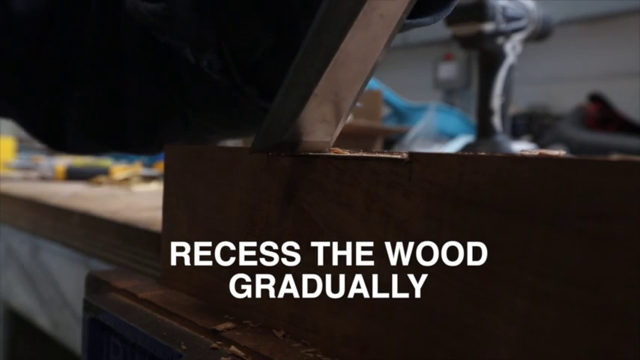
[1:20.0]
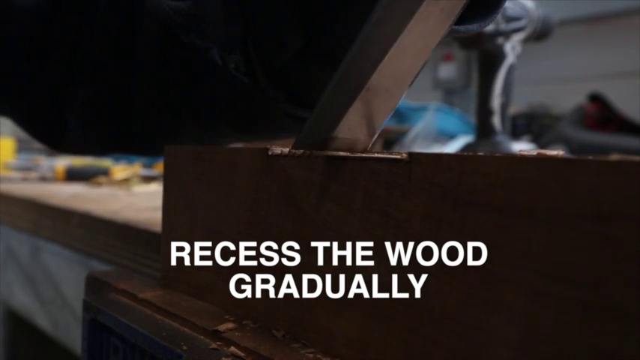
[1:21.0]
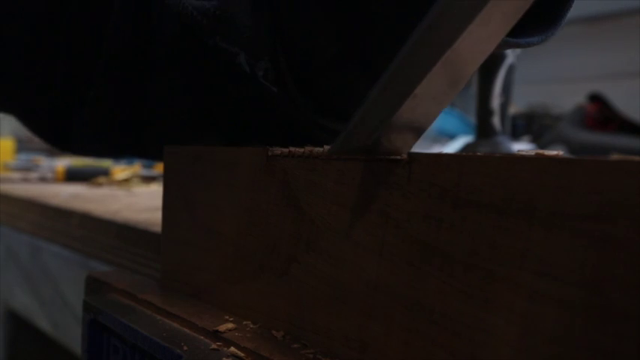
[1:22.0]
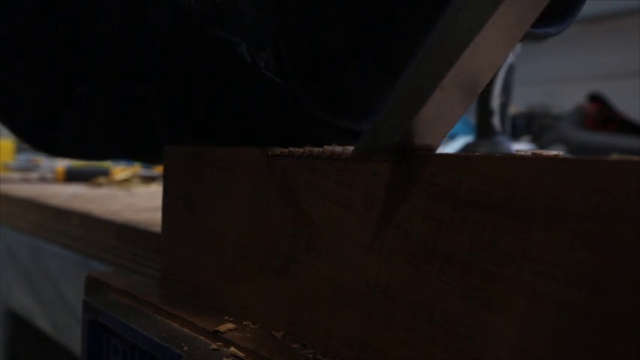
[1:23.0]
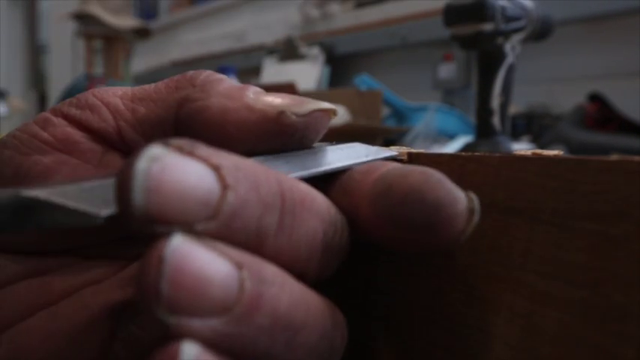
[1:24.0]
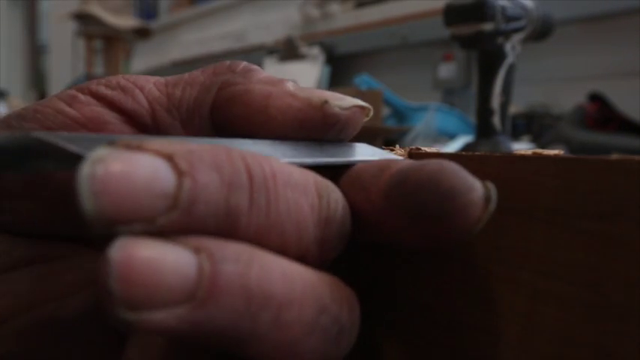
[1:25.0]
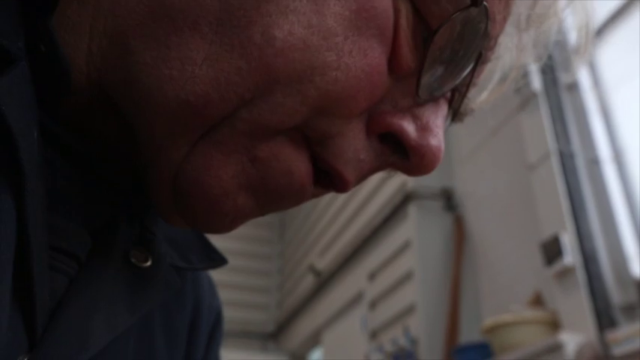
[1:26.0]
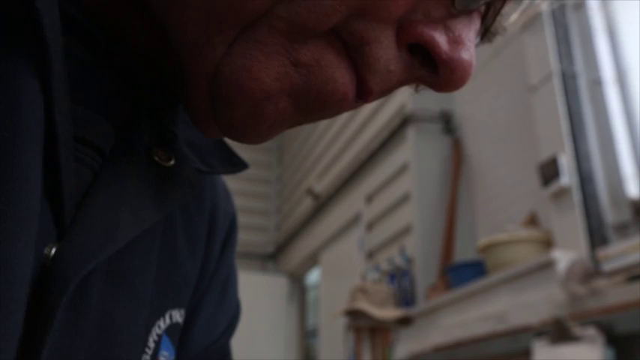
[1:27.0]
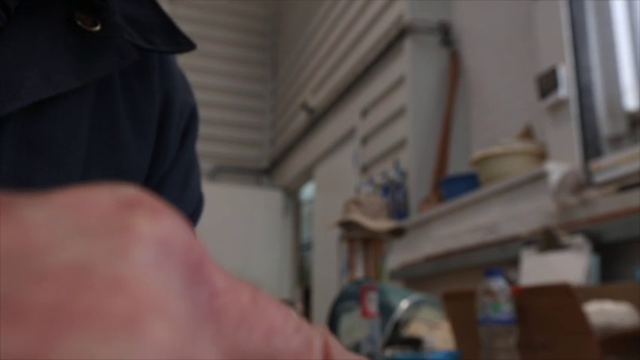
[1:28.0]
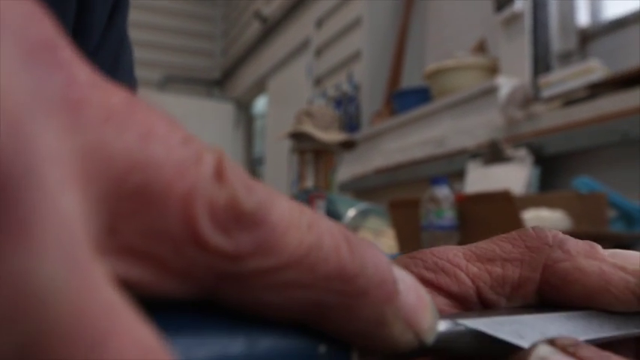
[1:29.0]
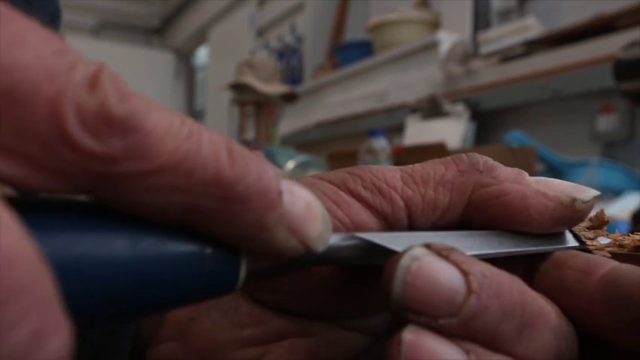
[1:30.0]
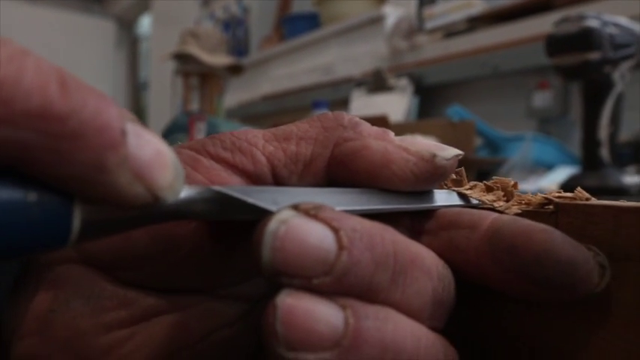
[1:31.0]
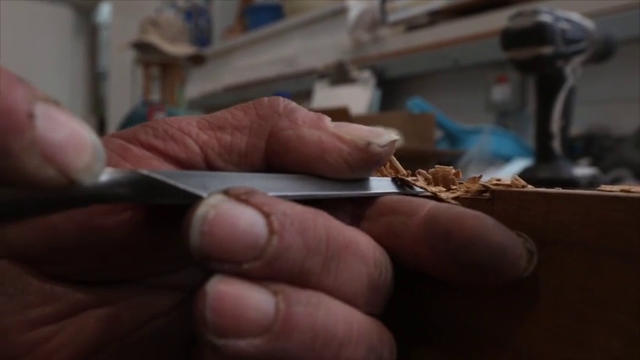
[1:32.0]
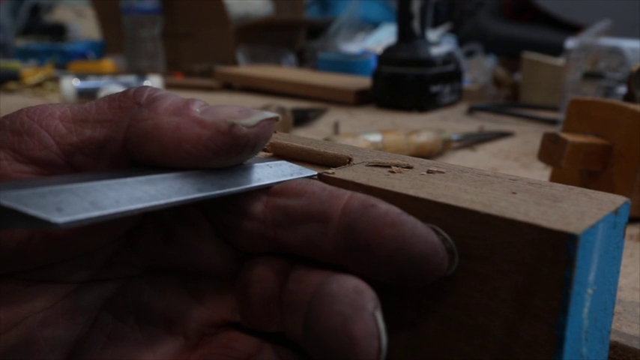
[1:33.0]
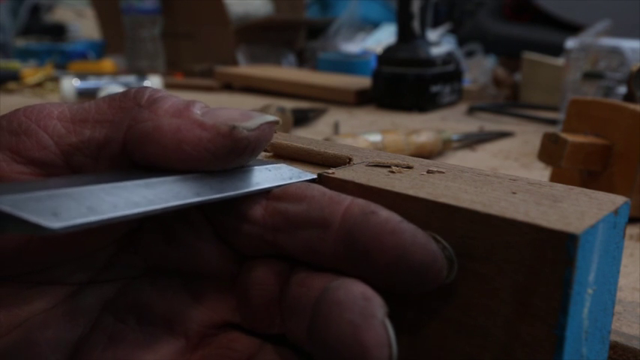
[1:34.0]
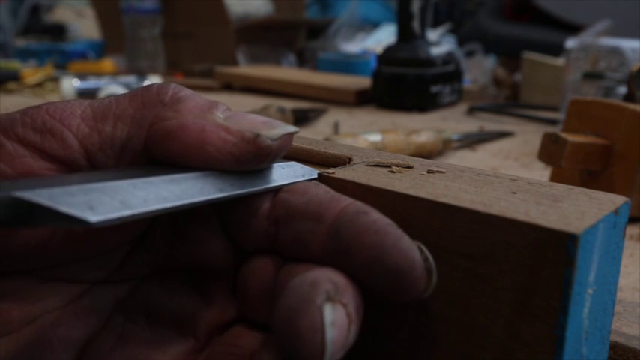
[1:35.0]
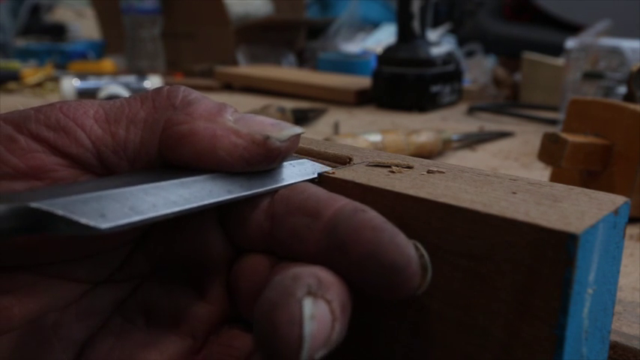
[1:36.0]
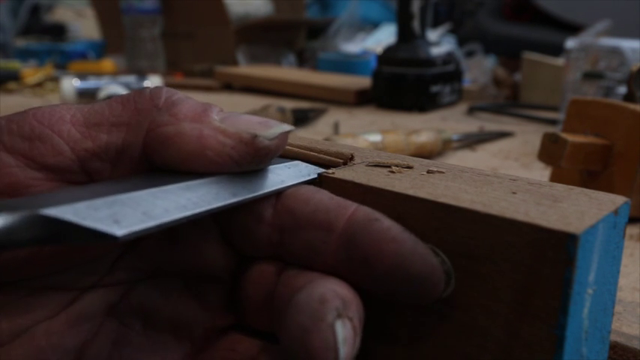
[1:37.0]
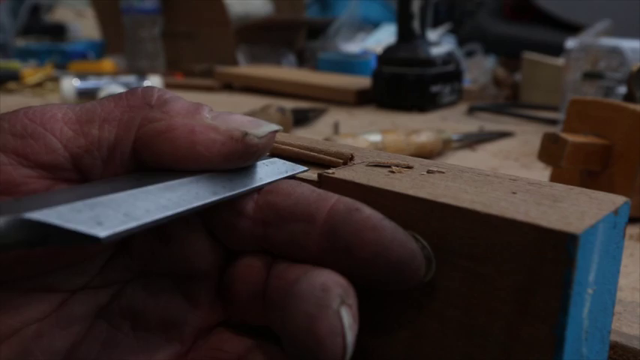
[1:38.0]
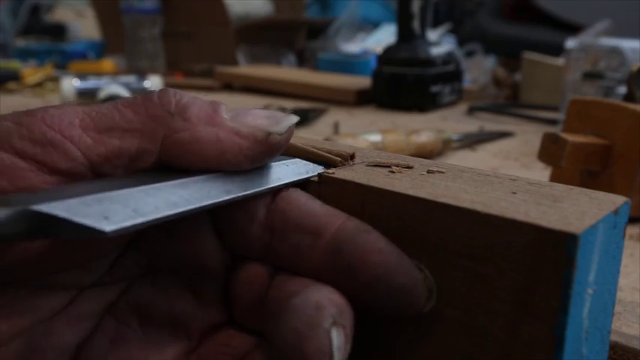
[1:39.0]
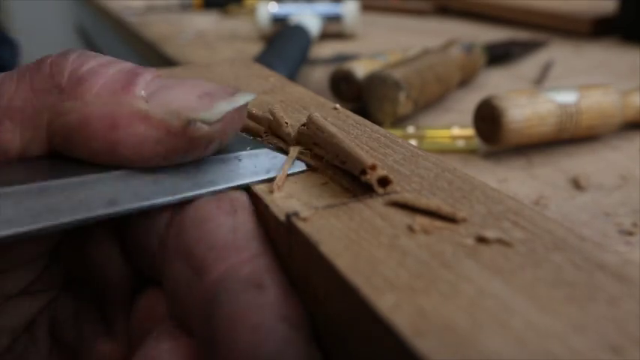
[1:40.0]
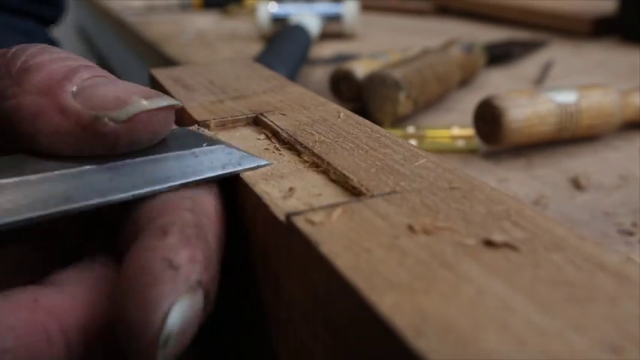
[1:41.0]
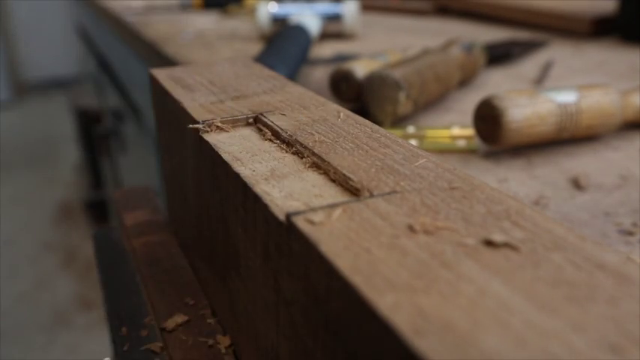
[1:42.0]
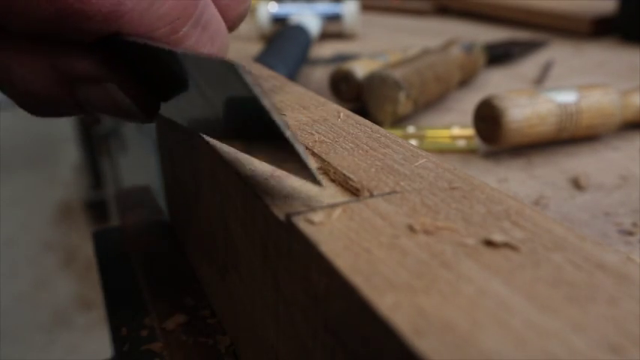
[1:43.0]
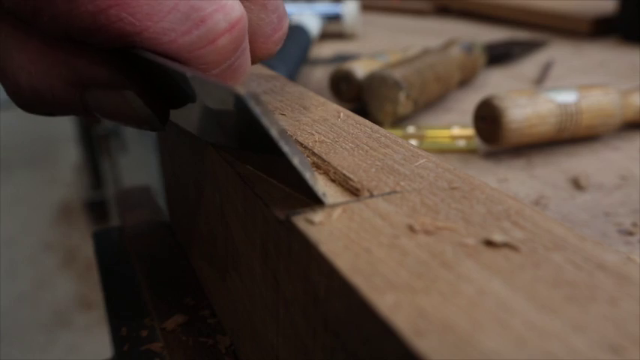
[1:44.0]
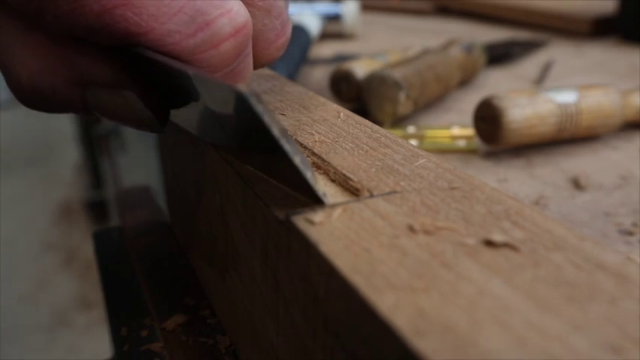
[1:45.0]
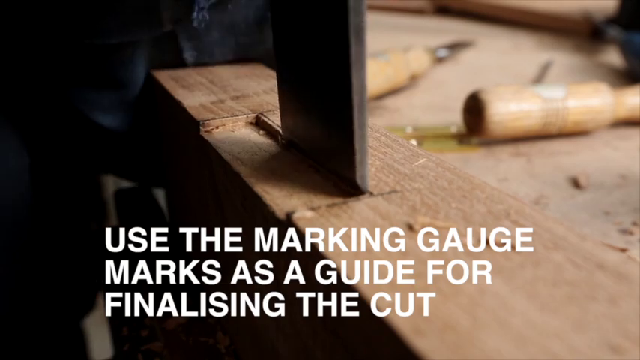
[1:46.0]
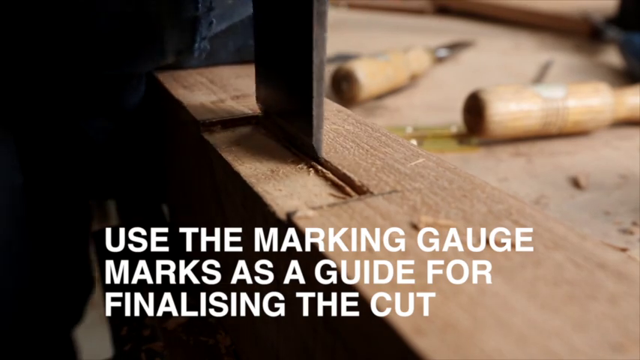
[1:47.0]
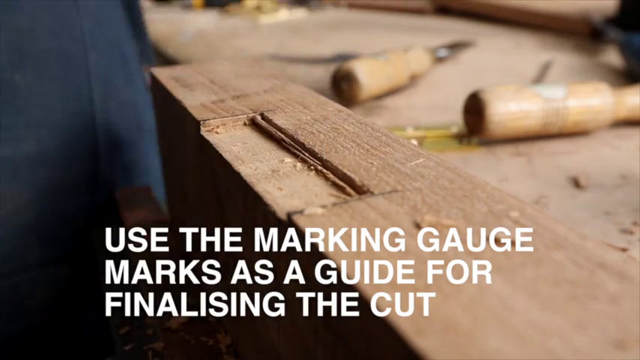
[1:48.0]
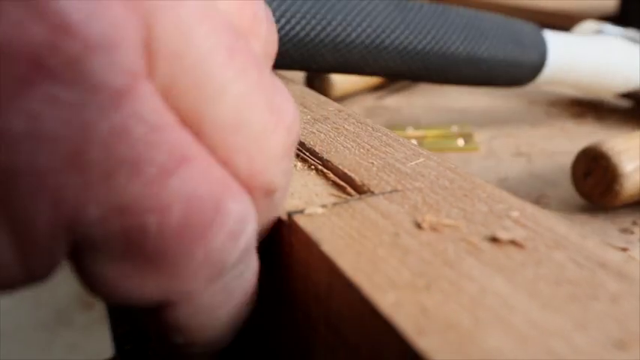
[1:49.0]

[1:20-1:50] Text below reads "recess the wood gradually." The person chisels a bit at a time, making the surface more even, in a kind of sawing motion around the edges, taking real care. The footage is sped up, probably to two times speed, while he chisels. Behind the wooden piece he is working on, other tools with wooden handles are on the table. He measures the bit, and text reads "use the marking gauge marks as a guide for finalizing the cut." He makes markings with the chisel that leave indentations, and is about to make another cut.